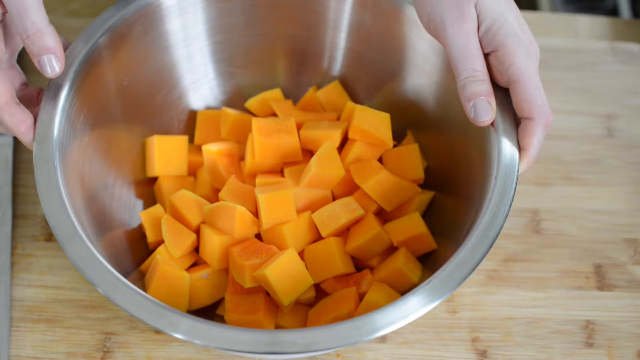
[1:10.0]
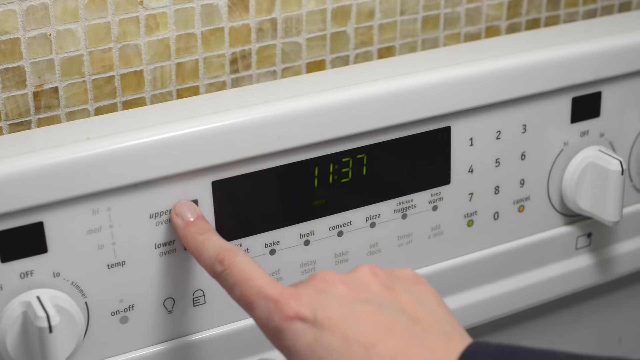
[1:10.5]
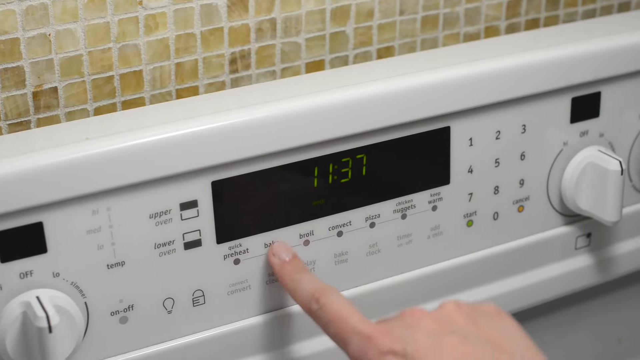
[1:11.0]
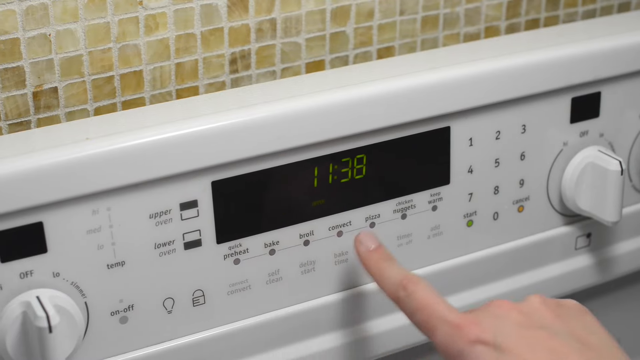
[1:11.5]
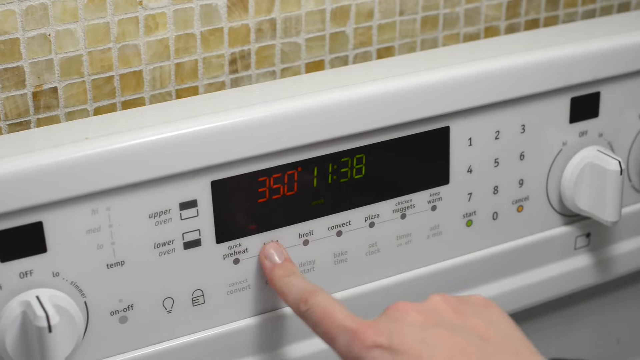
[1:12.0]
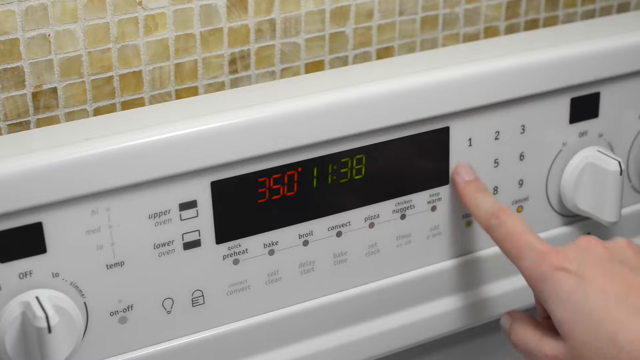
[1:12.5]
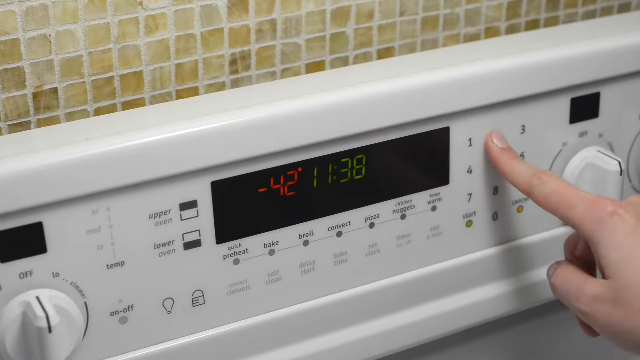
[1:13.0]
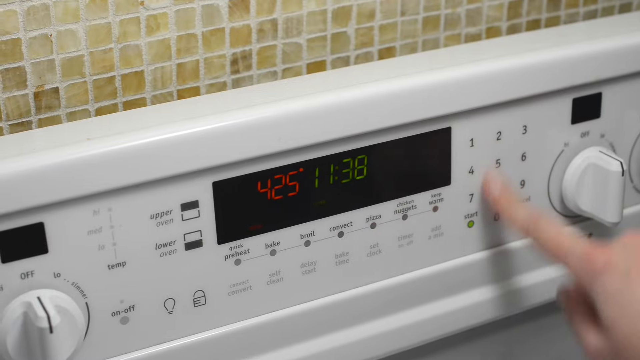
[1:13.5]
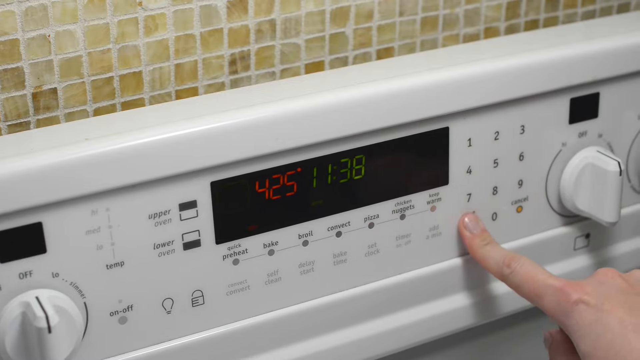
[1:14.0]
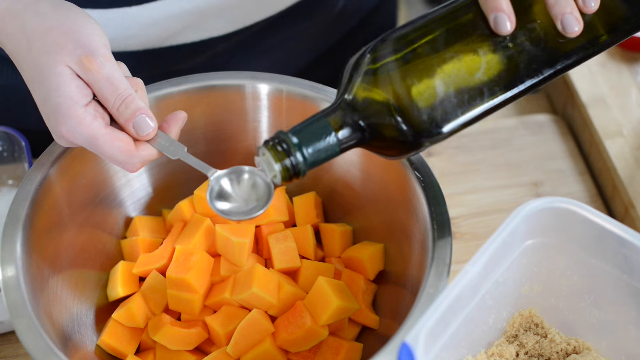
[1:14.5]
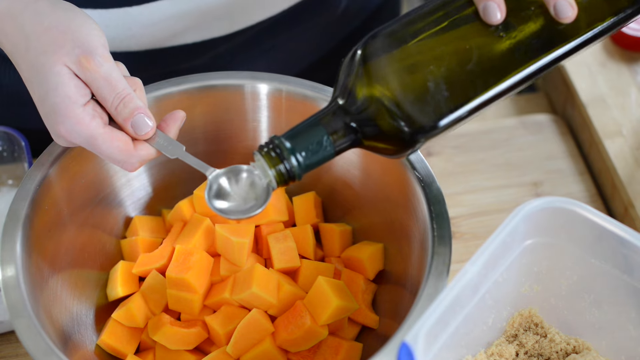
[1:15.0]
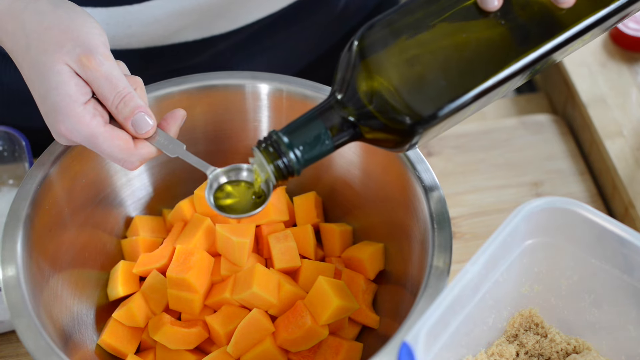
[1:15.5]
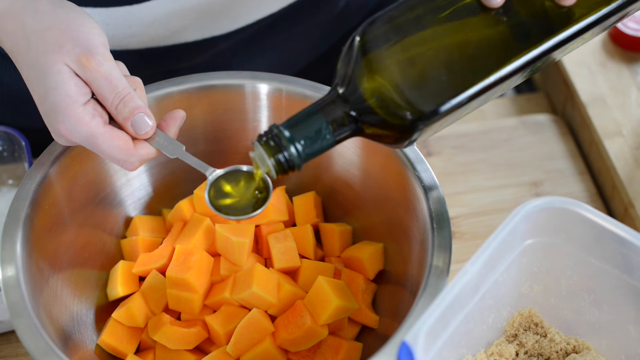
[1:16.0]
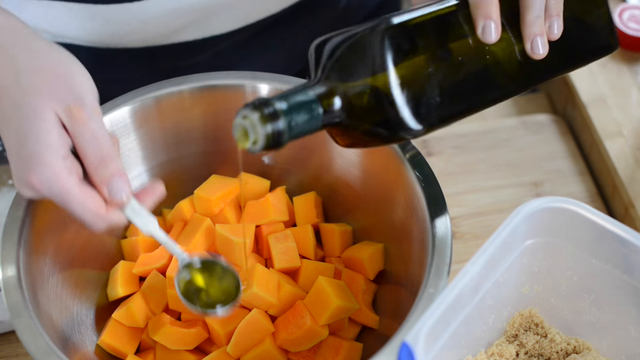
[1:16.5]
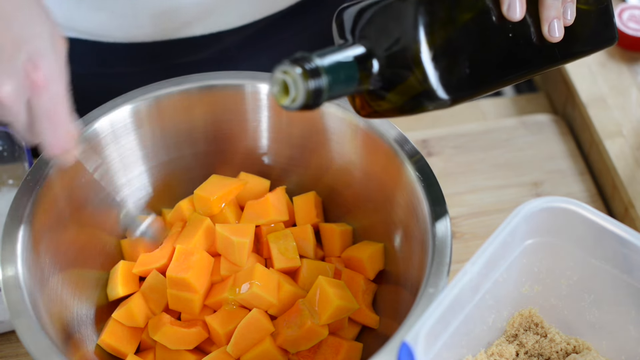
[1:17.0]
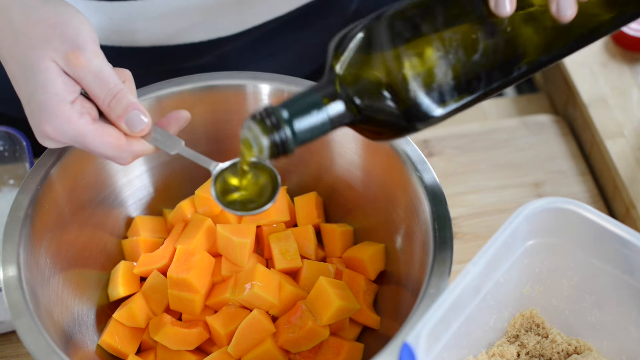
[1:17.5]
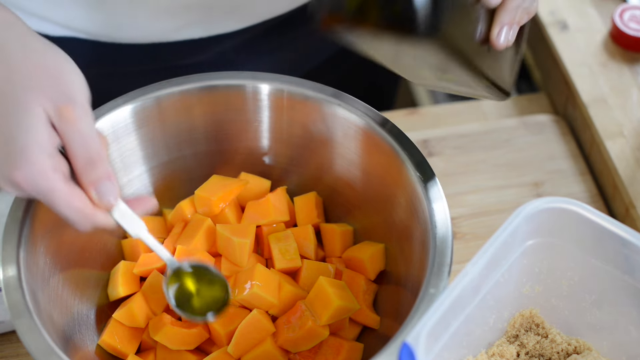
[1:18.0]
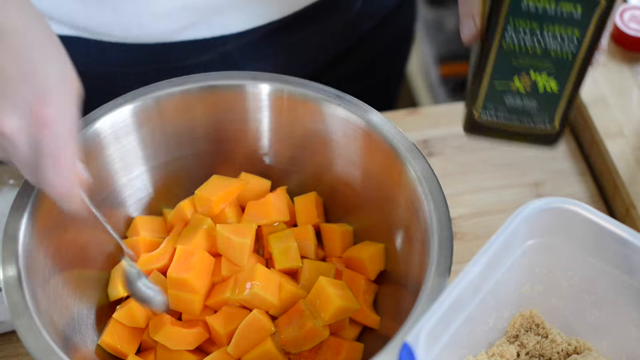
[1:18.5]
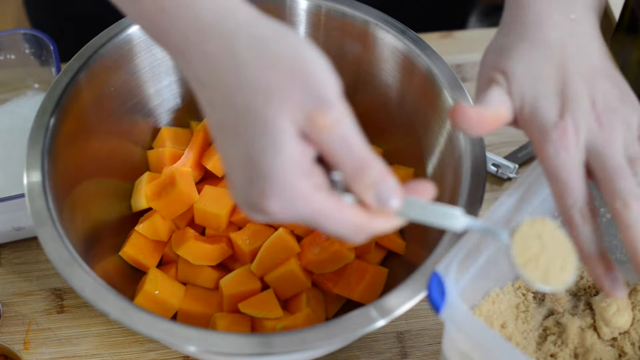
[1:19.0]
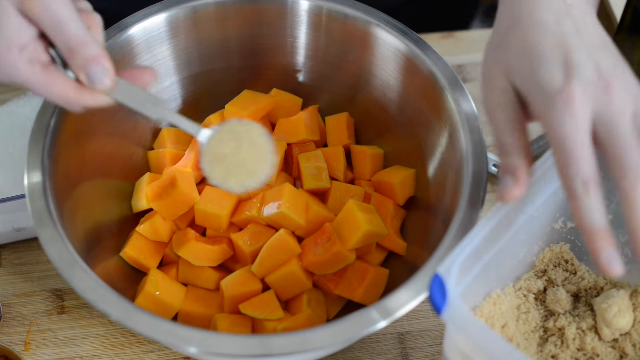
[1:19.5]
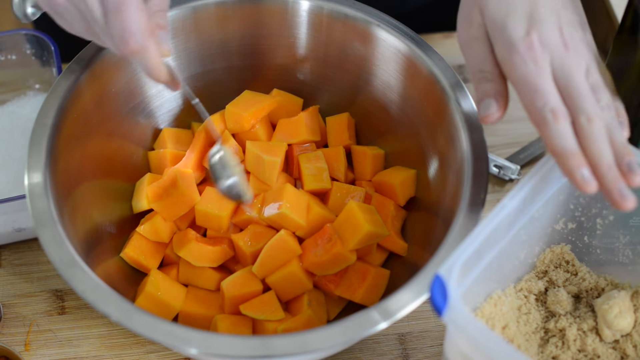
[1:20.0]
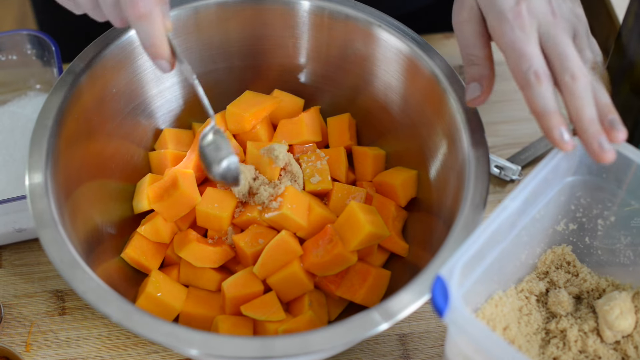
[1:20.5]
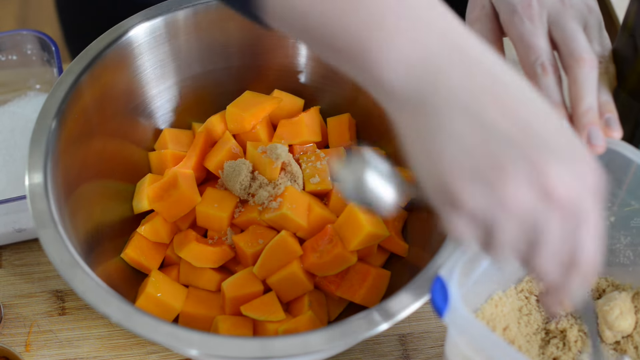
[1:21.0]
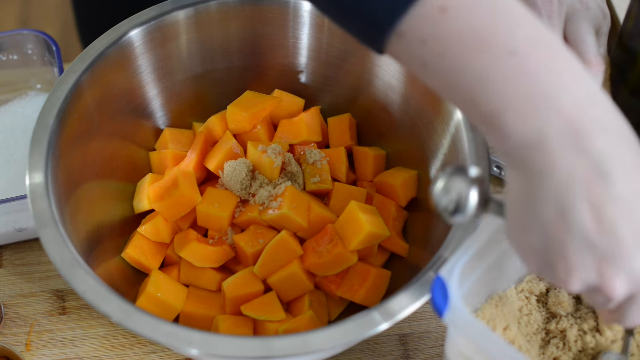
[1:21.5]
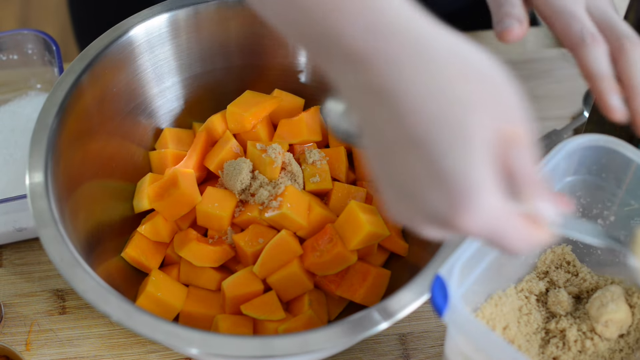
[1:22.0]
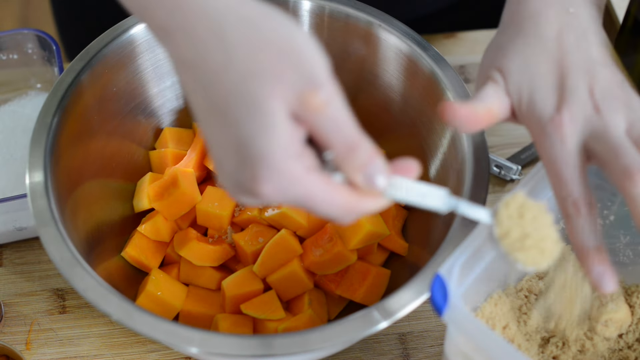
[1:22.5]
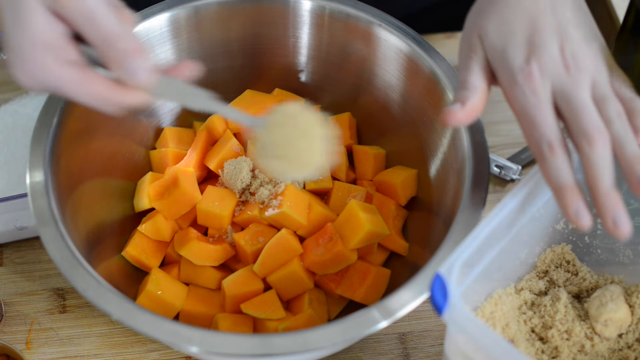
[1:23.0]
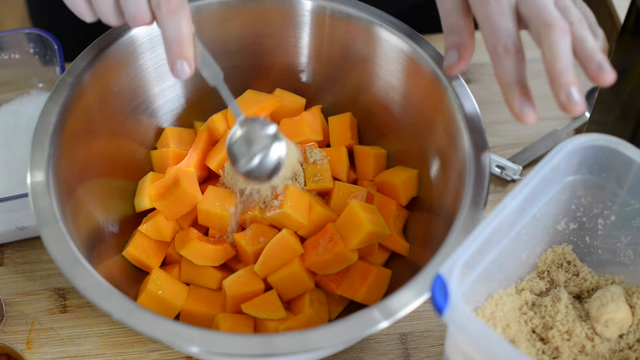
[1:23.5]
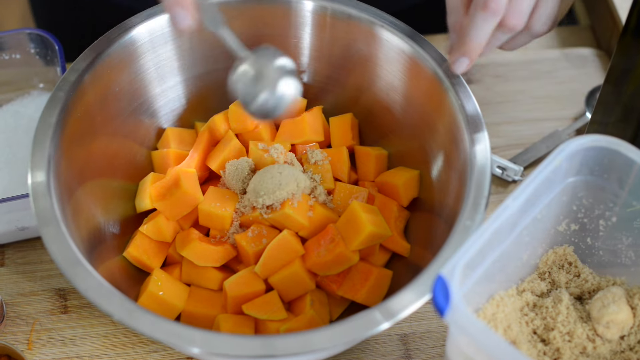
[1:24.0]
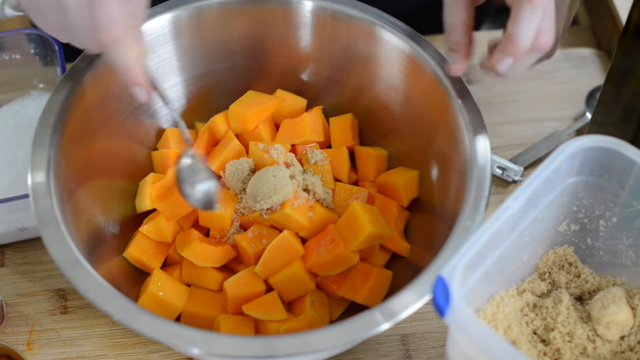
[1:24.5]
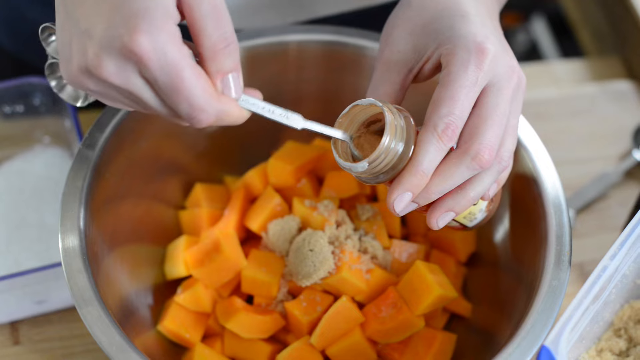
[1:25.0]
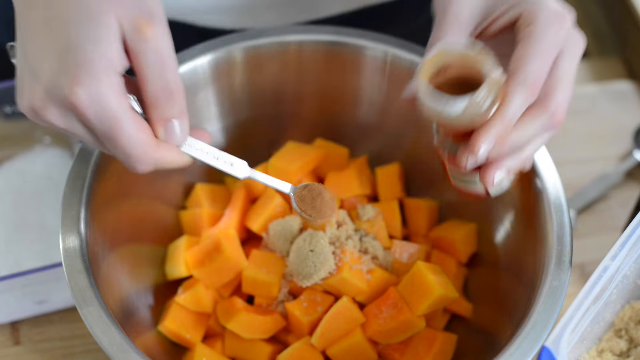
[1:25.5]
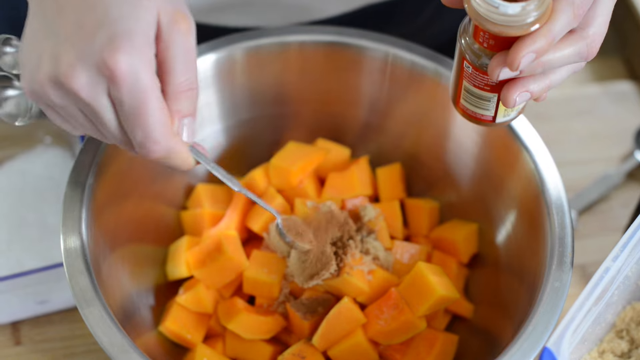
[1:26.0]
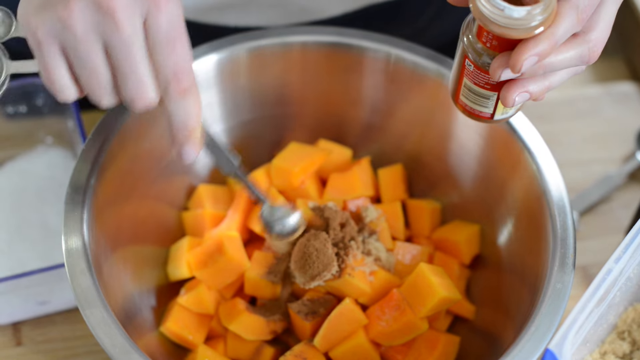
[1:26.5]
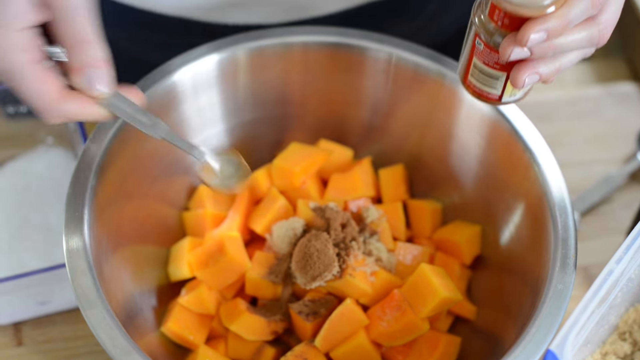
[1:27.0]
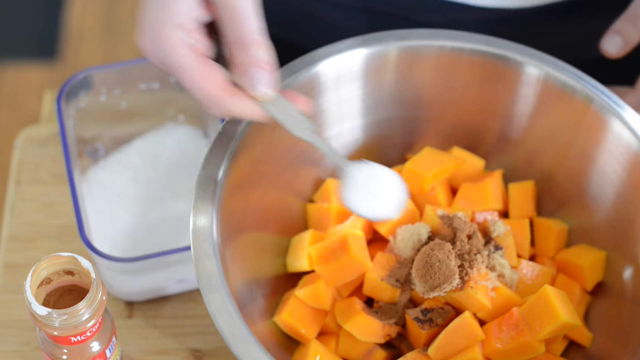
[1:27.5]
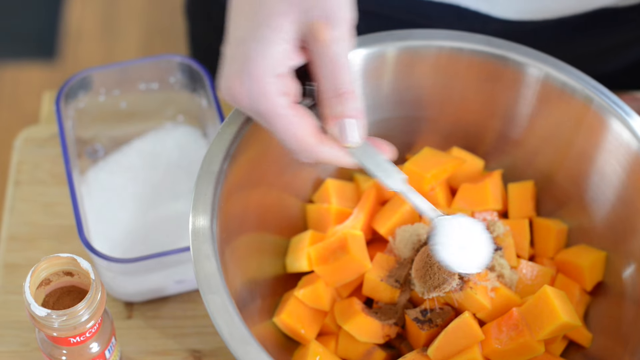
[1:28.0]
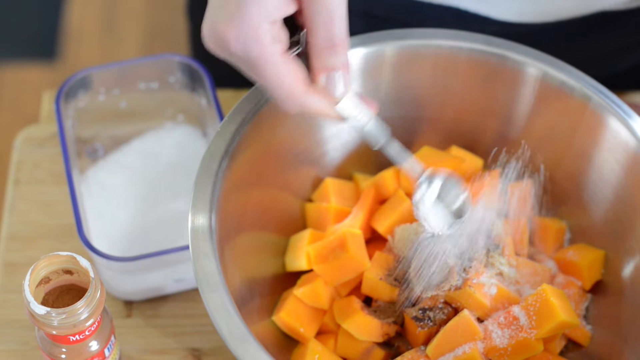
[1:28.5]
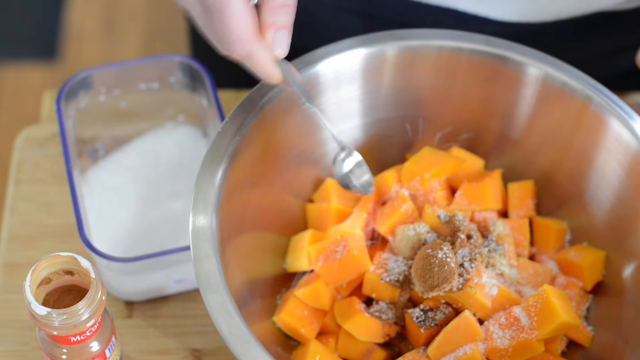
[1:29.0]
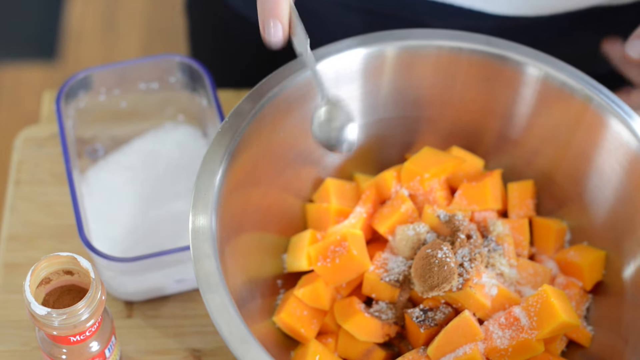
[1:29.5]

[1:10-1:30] In a cooking tutorial made of a series of quick cuts, the video cuts from the squash in a bowl to a person preheating a white oven, apparently to about 425. The person pours oil from a green-toned bottle onto the squash pieces in the bowl, then pours what possibly is brown sugar over the squash and levels the mixture off with a finger to make it even. They sprinkle something from a spice jar and use a small silver measuring spoon to add what looks like either sugar or salt and a nutmeg-looking mixture. It looks like they may be candying the squash. Only the person's hands, which are lighter skinned, are visible, and they wear what looks like a navy and white shirt. The video looks smooth and fairly professional.